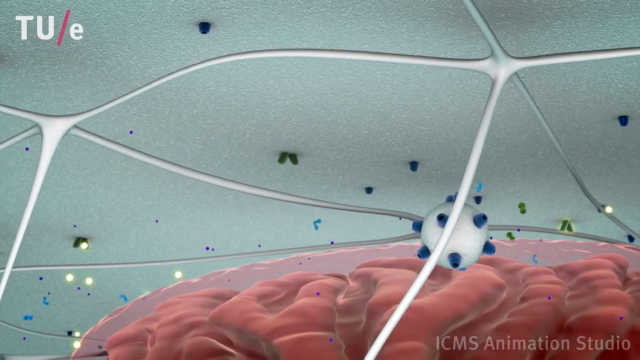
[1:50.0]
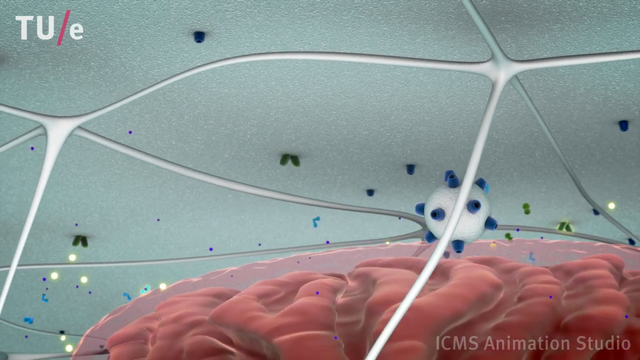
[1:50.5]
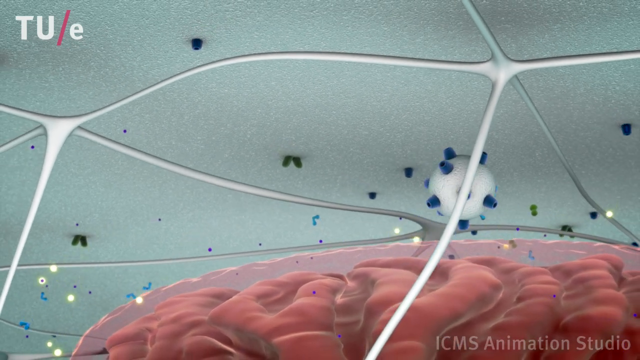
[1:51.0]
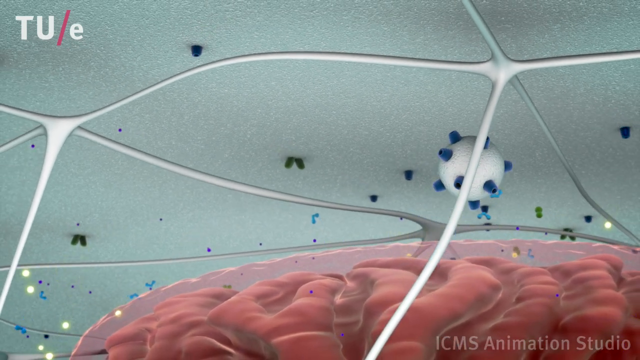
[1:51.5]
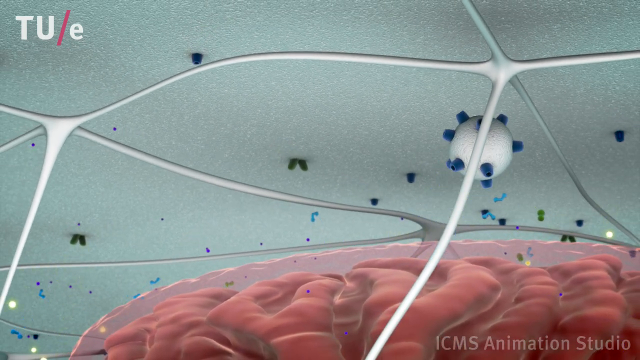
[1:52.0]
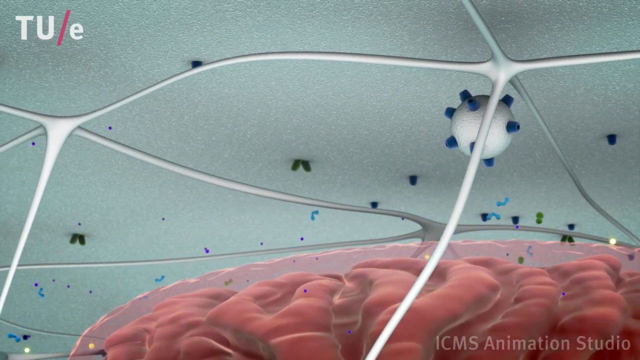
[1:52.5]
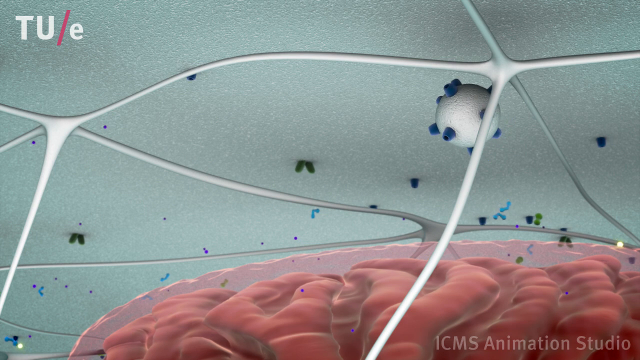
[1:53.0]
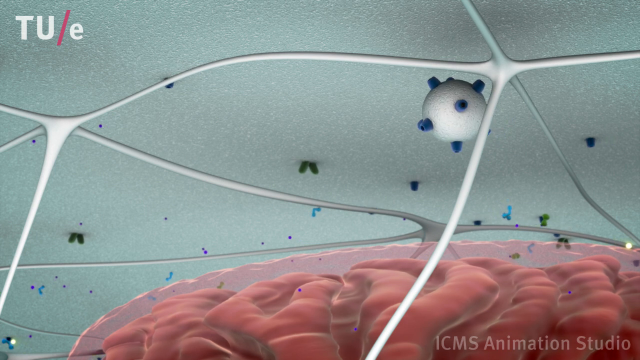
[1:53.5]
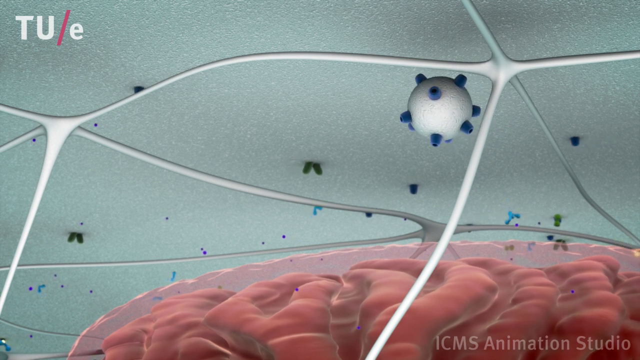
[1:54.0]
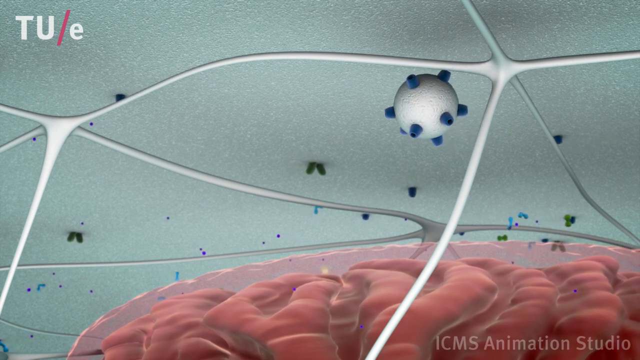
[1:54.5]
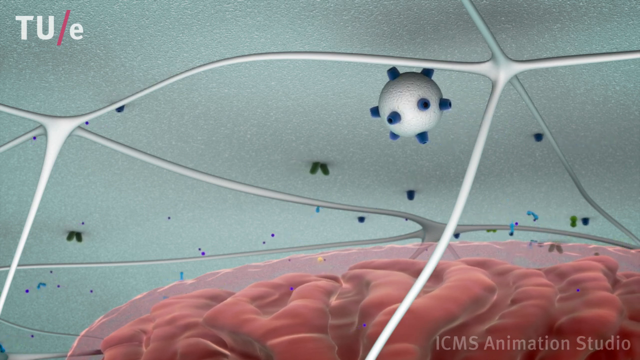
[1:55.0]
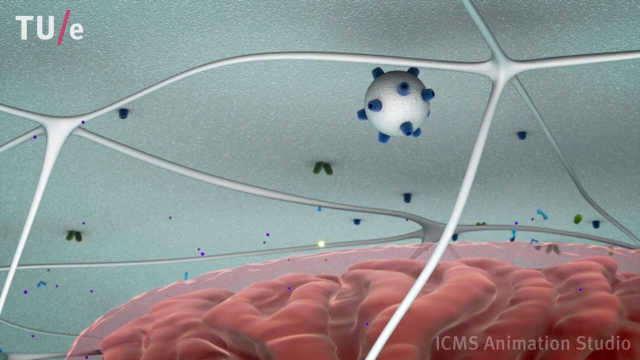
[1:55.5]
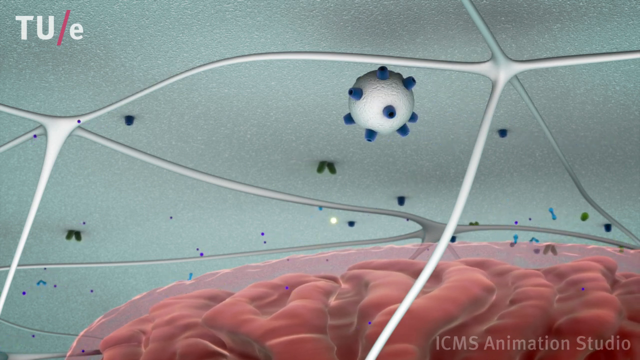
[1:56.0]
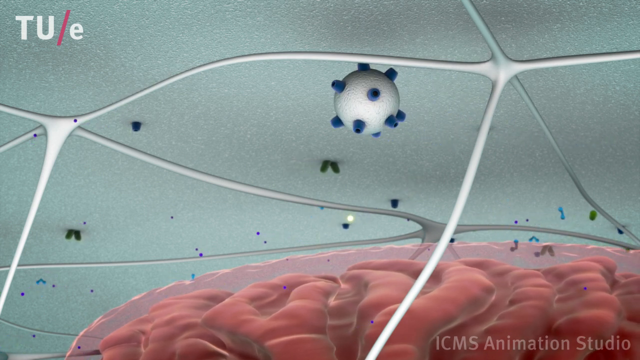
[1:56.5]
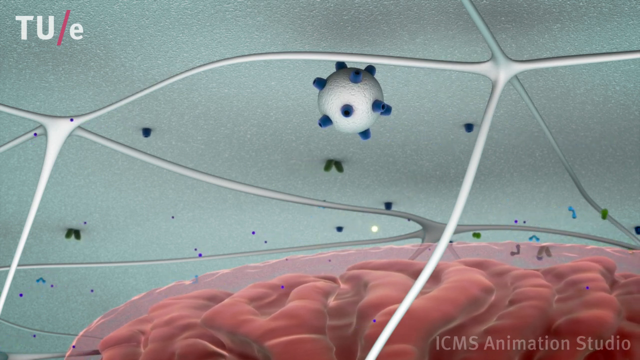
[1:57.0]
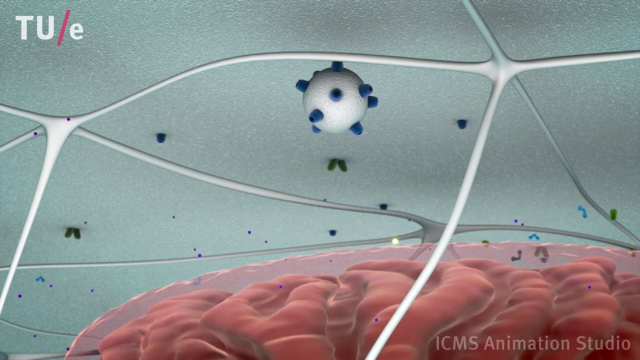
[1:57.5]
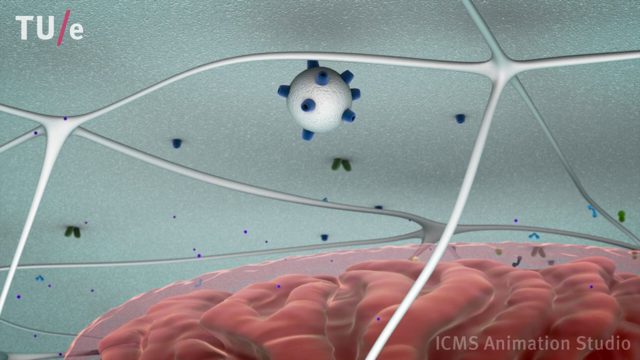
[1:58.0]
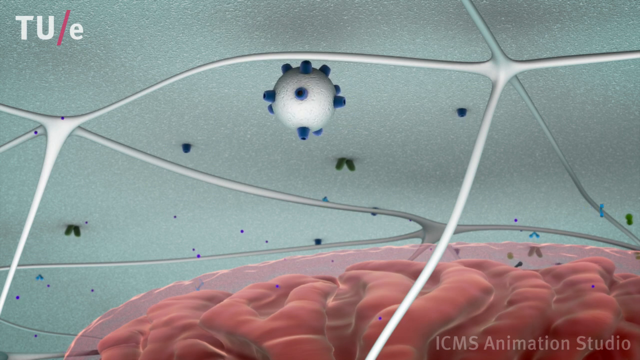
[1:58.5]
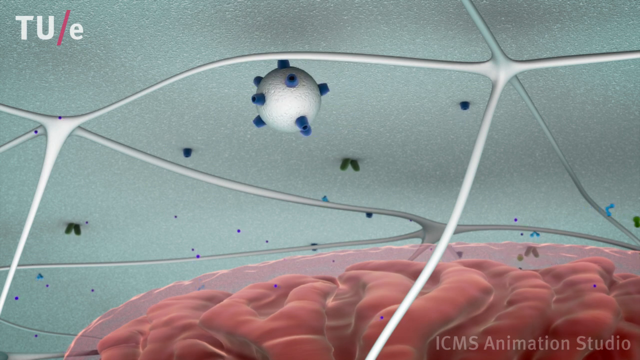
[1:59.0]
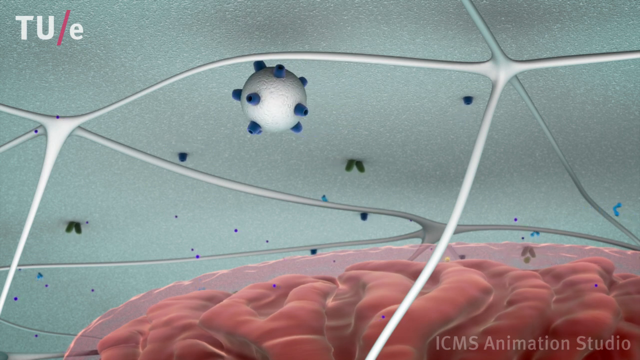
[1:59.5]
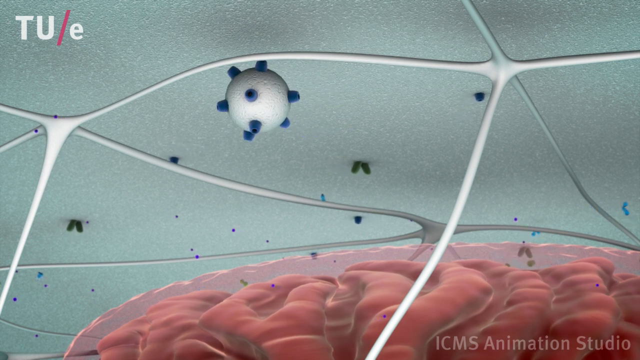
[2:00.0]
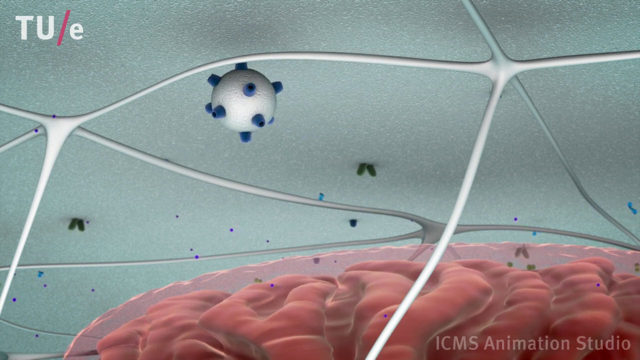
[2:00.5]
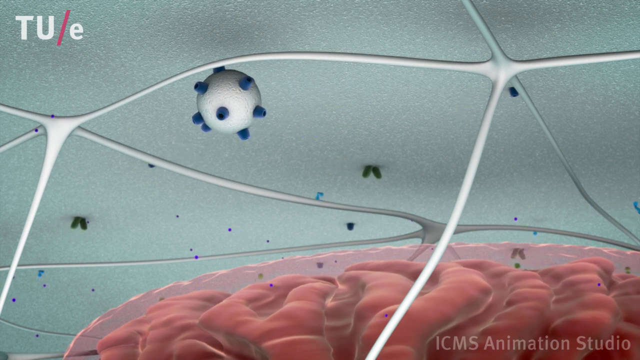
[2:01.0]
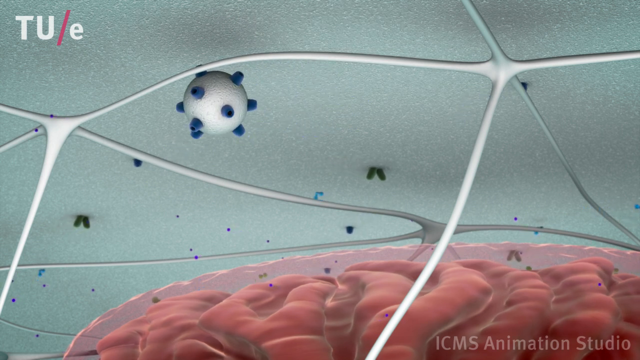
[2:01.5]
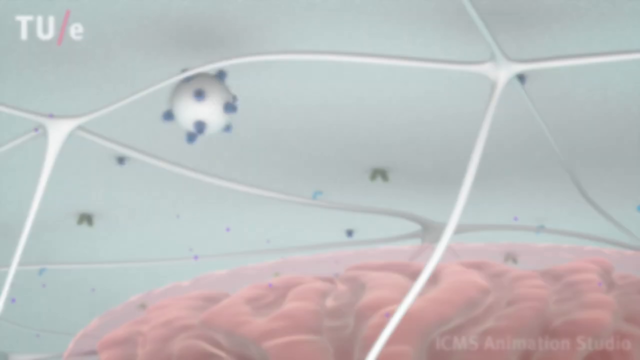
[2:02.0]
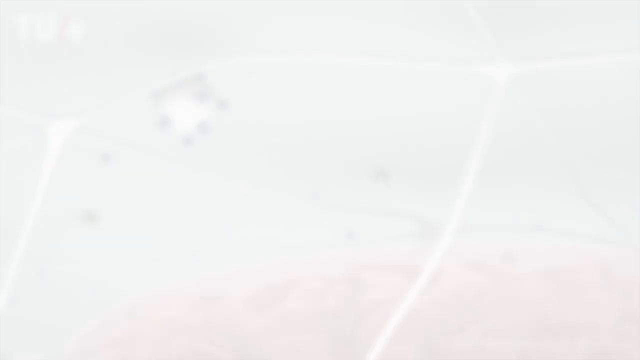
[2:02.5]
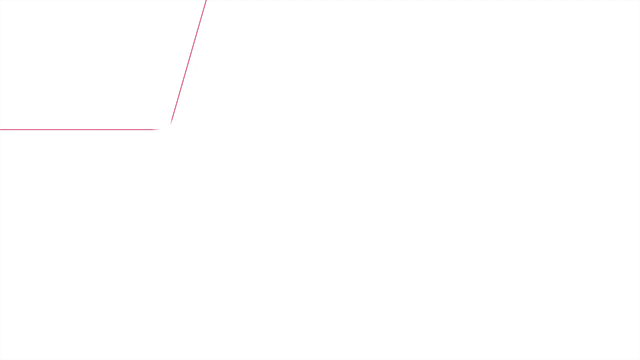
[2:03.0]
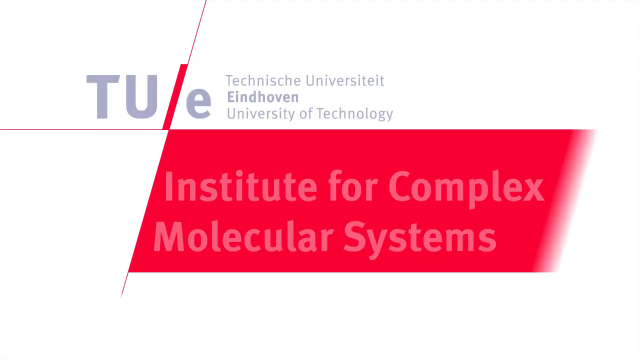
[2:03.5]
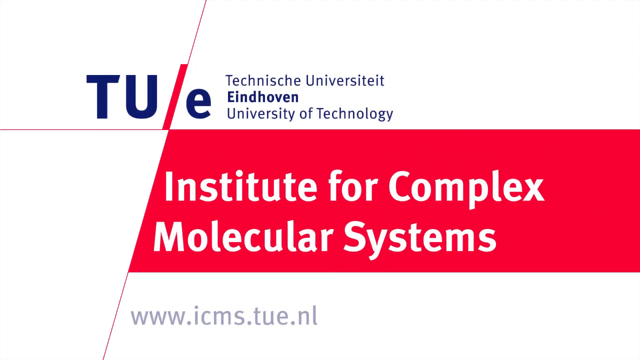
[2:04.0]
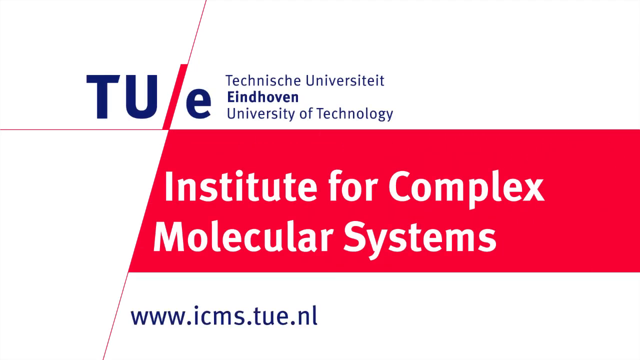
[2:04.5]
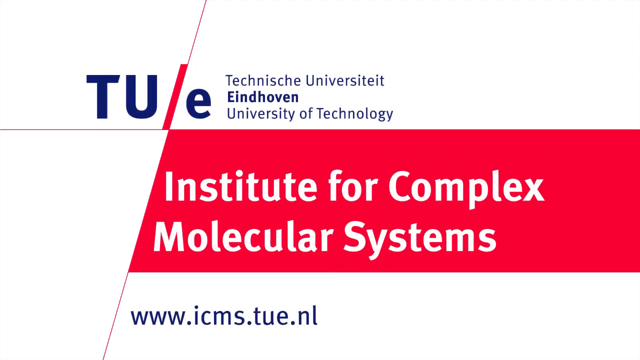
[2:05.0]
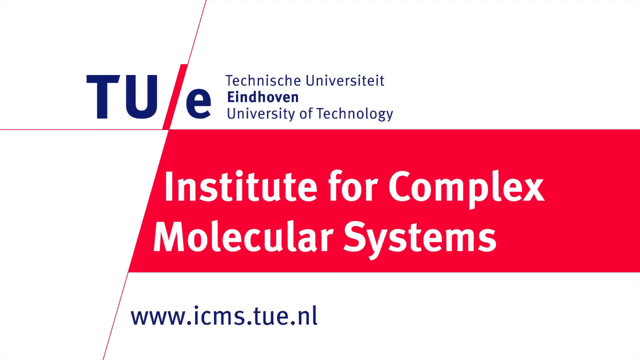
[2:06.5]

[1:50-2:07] The liposomes move within the muscle groups and attach themselves, and fusion happens; after the fusion, deactivation follows. The video is credited to the University of Technology Institute for Complex Molecular Systems, and the web address www.icms.tue.nl is given for more information.